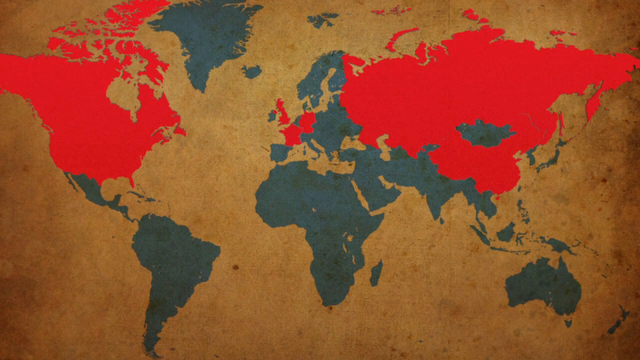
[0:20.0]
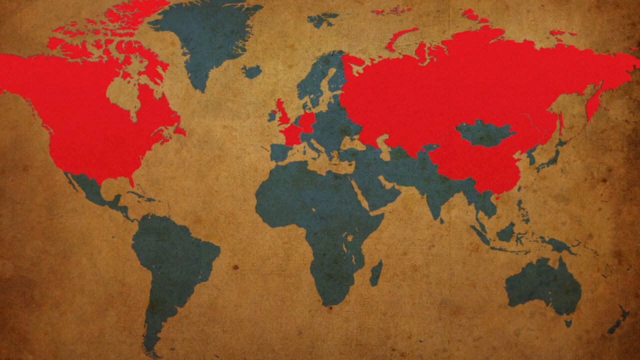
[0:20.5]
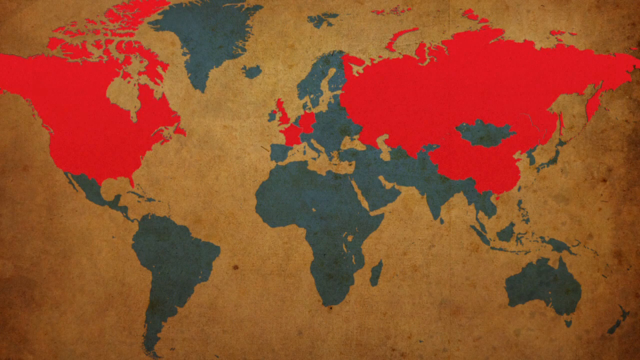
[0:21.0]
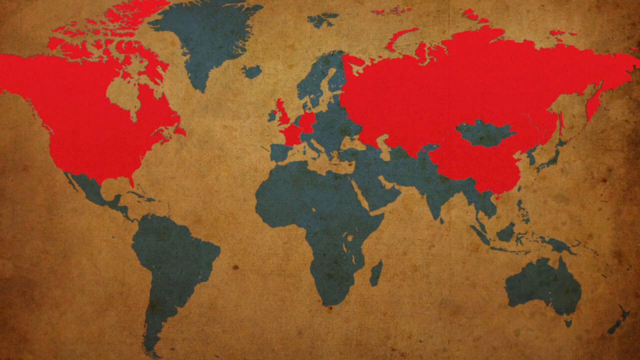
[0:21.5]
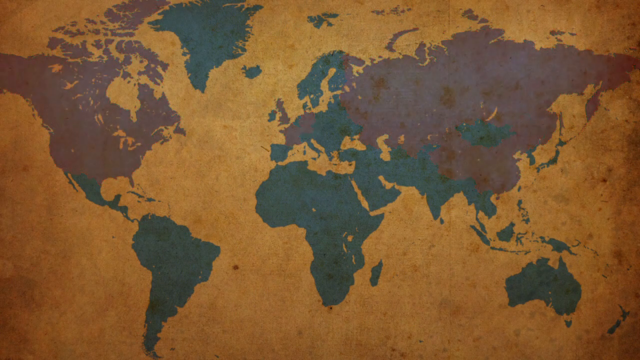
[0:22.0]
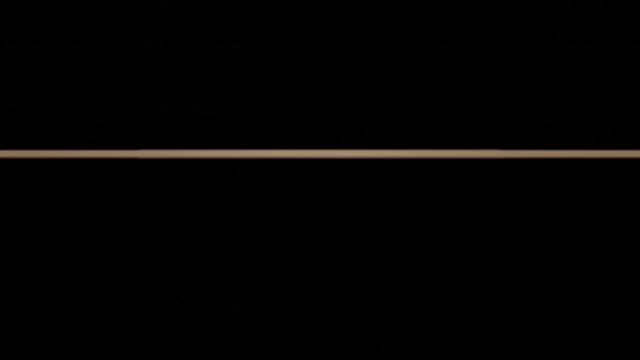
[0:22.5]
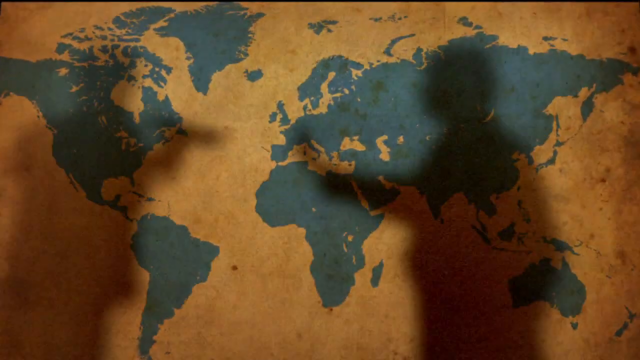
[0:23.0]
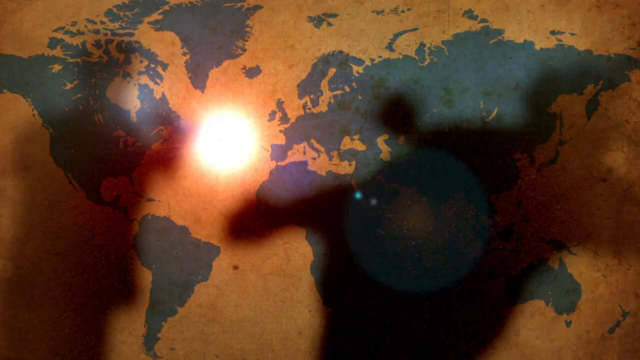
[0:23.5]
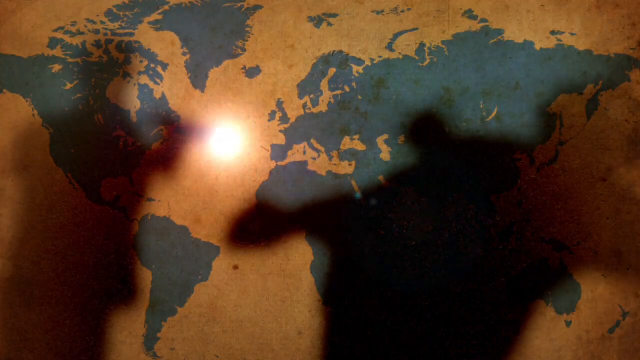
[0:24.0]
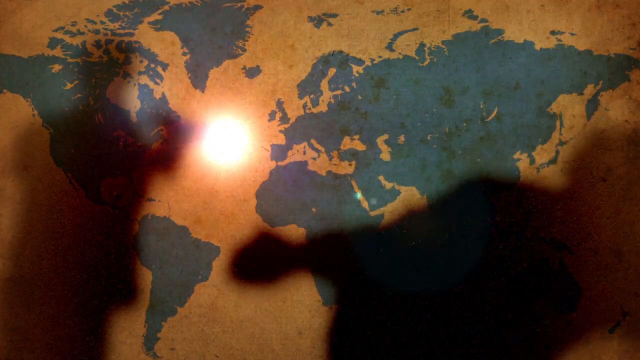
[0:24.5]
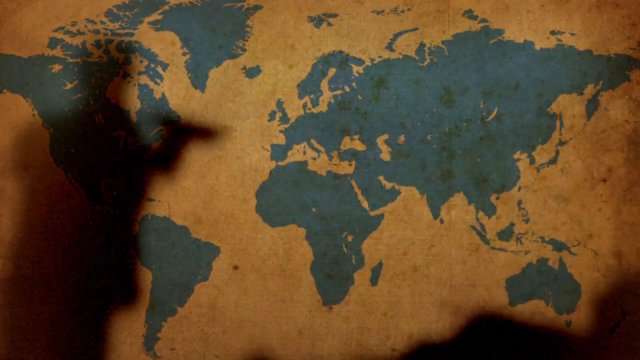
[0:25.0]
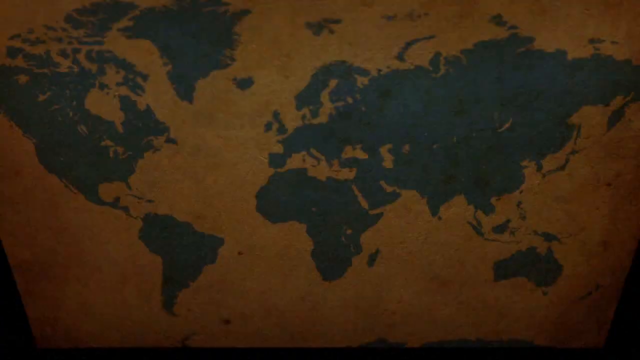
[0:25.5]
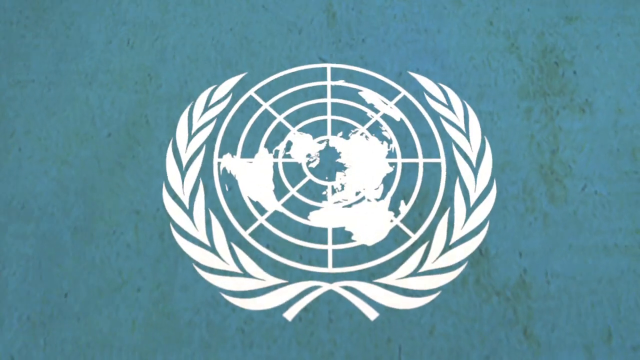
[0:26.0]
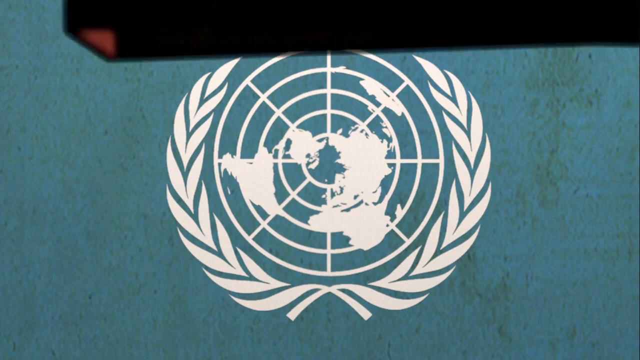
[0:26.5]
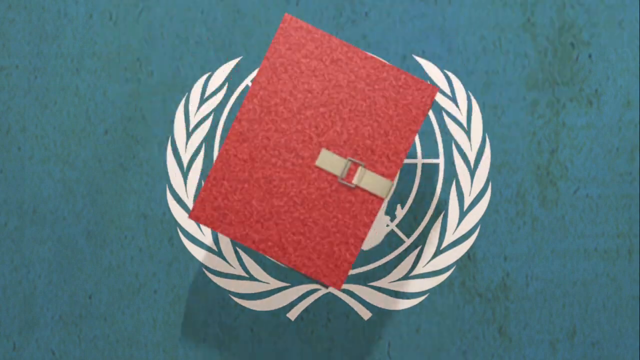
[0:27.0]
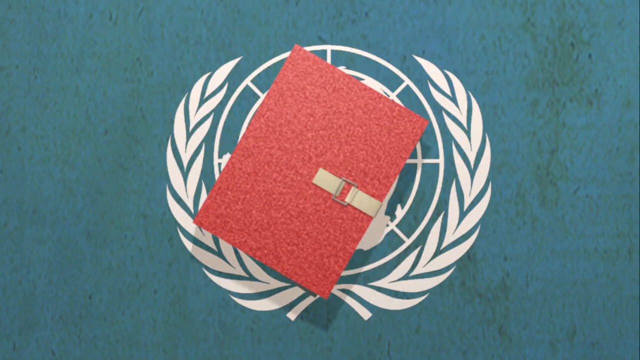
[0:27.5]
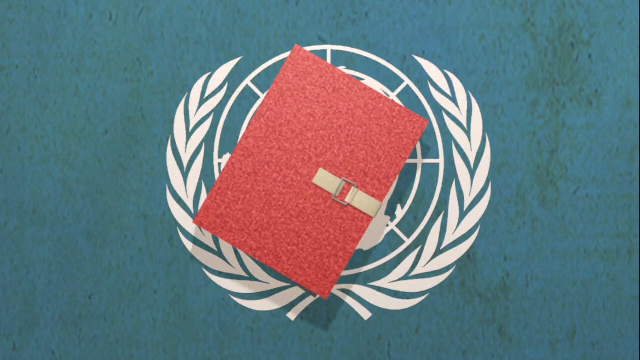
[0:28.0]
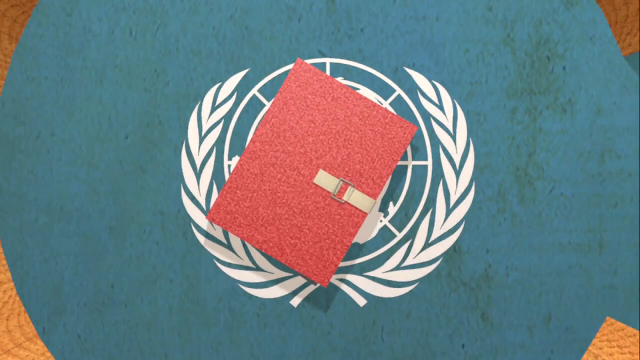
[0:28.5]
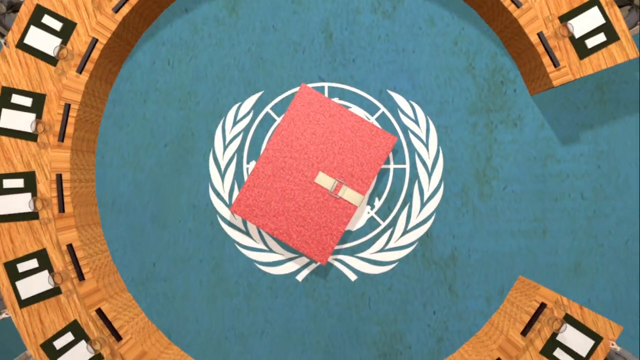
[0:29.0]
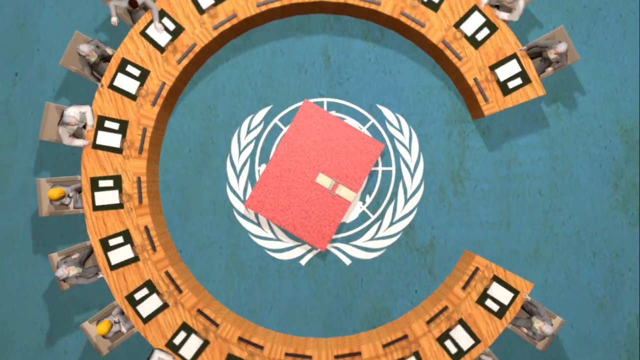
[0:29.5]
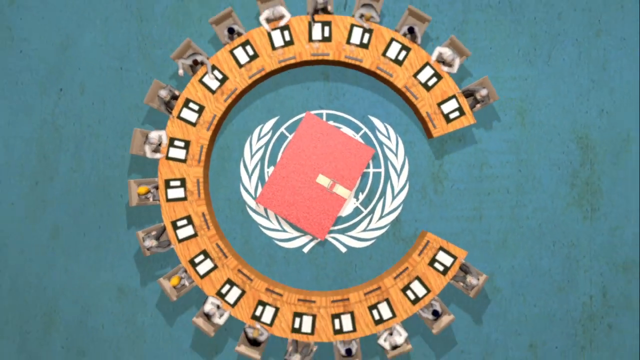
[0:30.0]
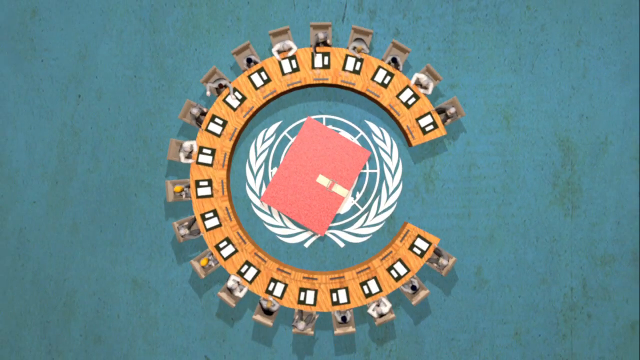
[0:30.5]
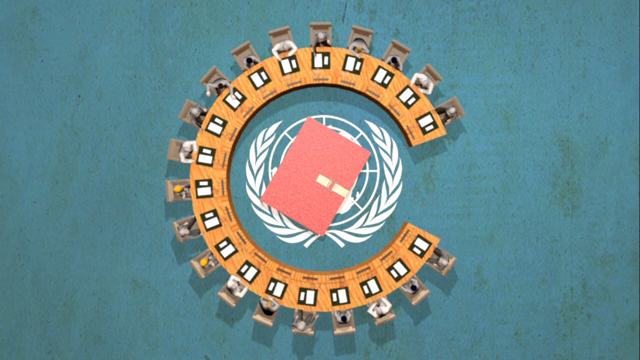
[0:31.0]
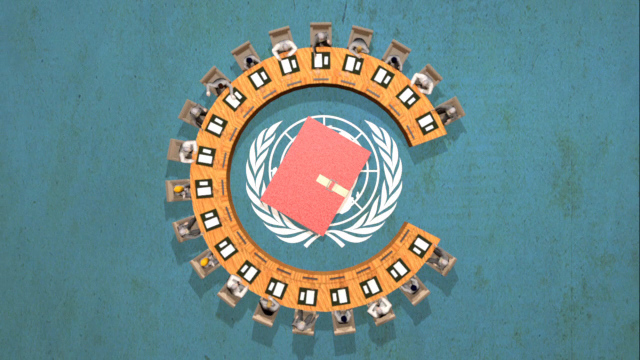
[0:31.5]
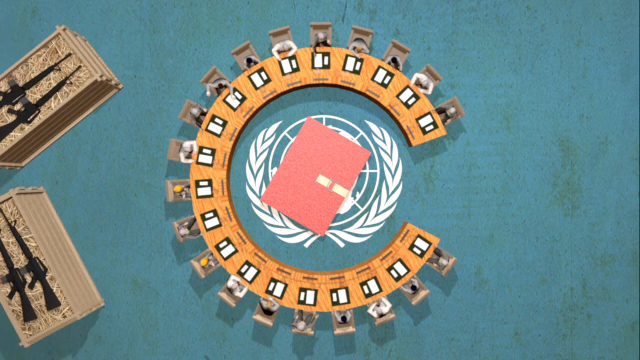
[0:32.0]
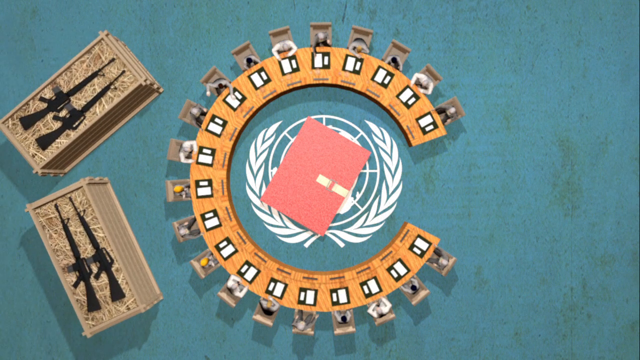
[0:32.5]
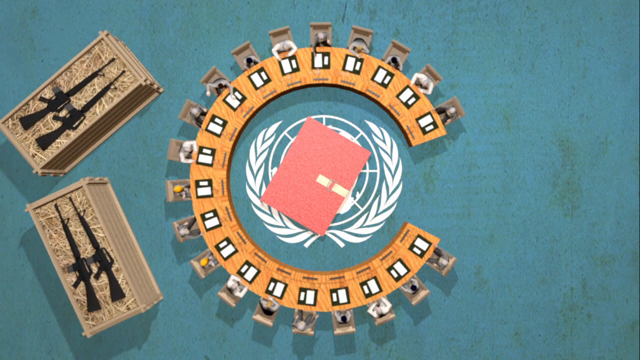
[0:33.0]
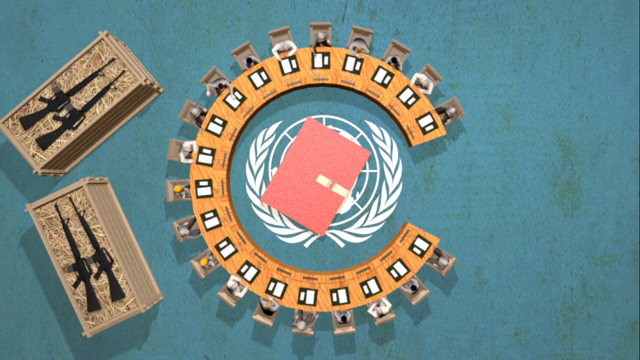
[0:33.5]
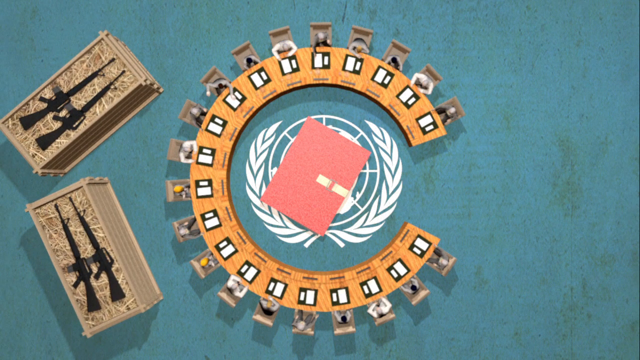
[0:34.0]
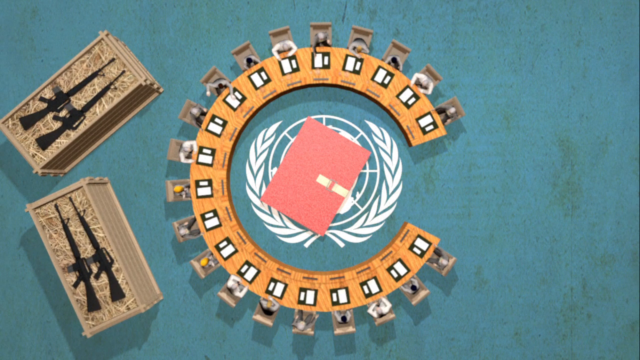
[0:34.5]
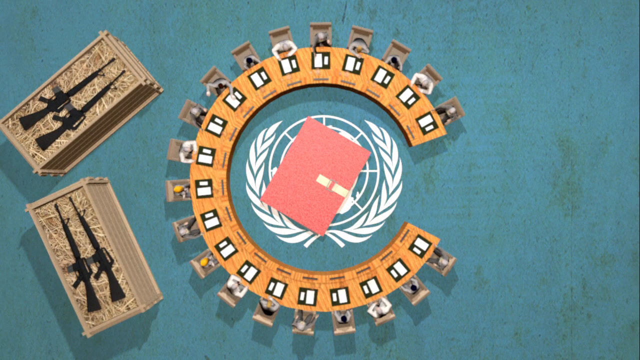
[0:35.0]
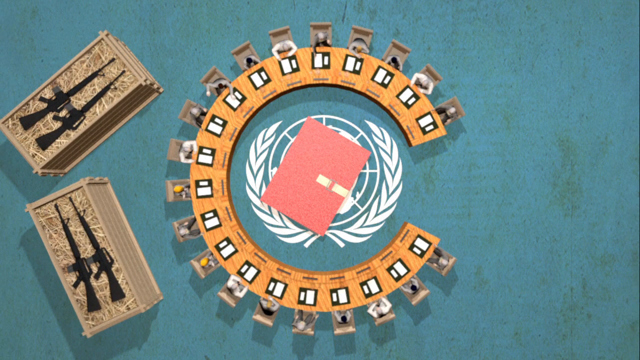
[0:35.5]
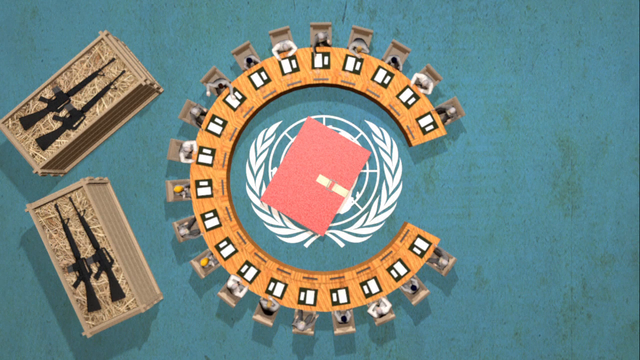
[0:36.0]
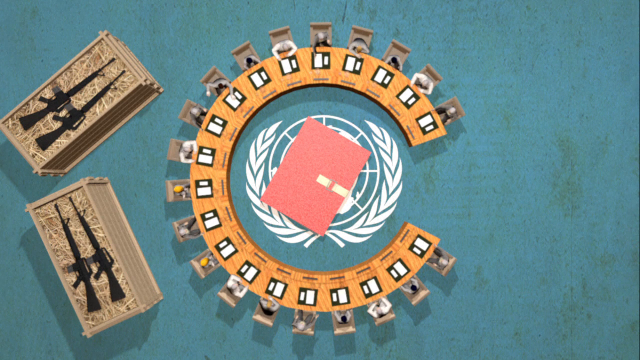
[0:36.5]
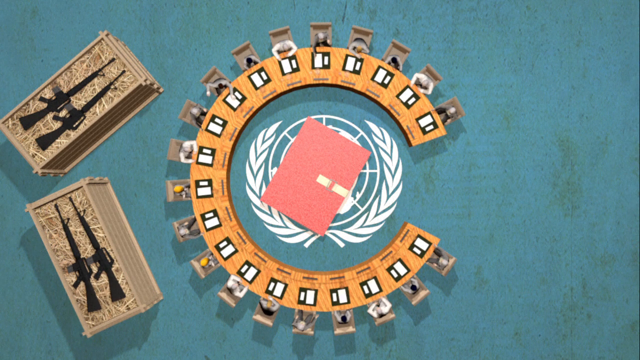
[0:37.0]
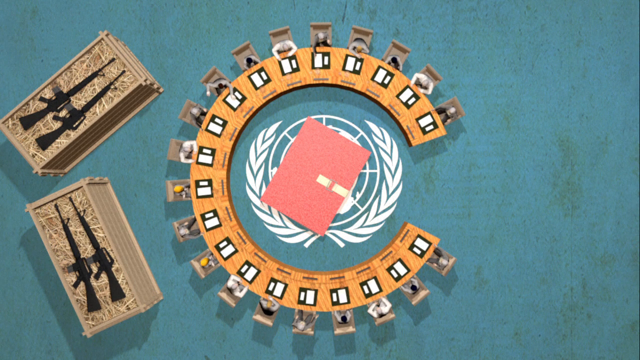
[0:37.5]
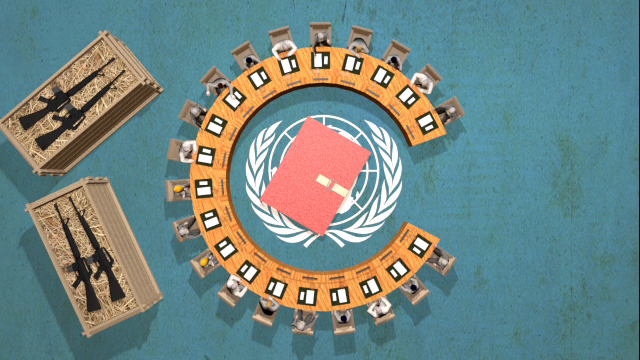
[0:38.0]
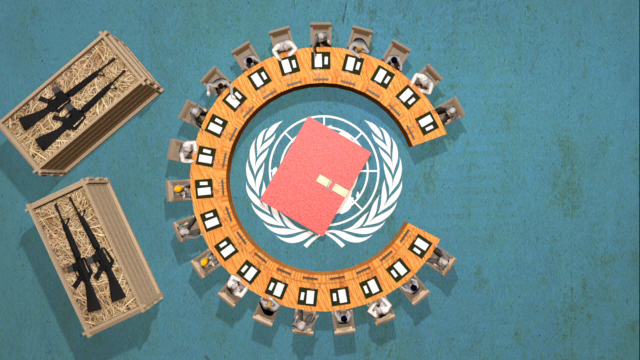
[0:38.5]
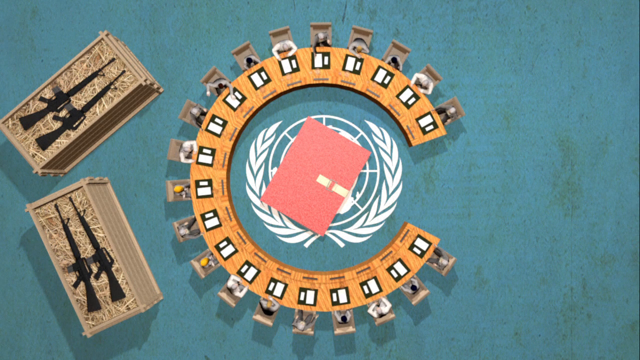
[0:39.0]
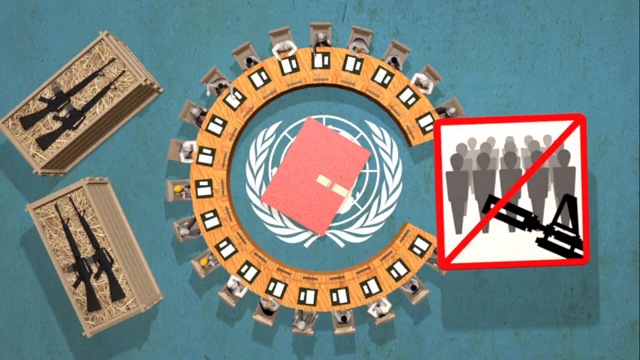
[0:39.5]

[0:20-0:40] A map of the continents of Earth shows the continents in blue and the oceans in brown. Some continents are highlighted in red, including North America, most of northern Asia except Mongolia, and some parts of Europe. The scene cuts to the map again, this time with the silhouette of a person on the left side who seems to have a gun in their hand and seems to be firing, with fire coming out of the gun's barrel. On the right side is the silhouette of what looks like a person being shot and falling to the ground. It cuts to a United Nations logo, and a red book falls on top of it. Then a cartoon image shows a semi-circle that is also a conference table, with people sitting next to it on gray chairs. On the left side is a crate with black assault rifles inside it, and on the right side is the silhouette of a gray stick man with what looks like a gun in the foreground, with a red line going across.